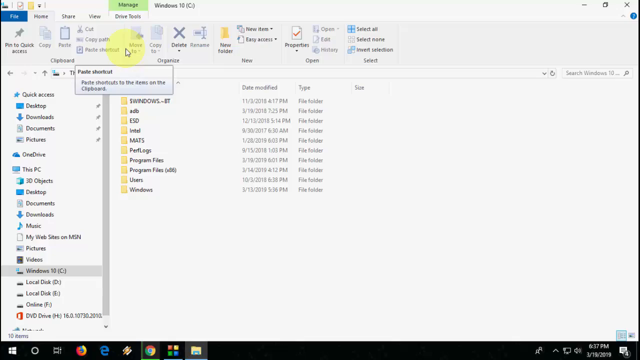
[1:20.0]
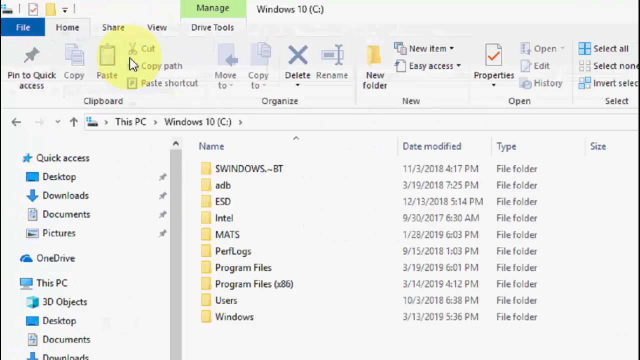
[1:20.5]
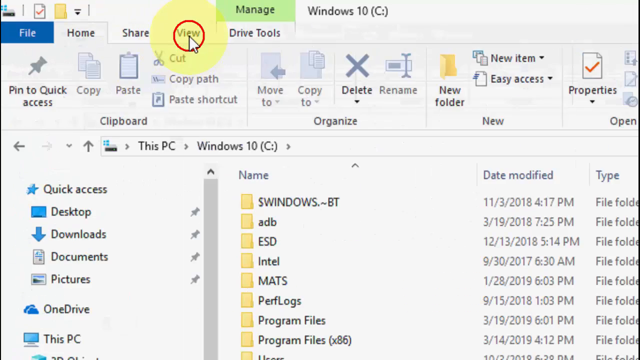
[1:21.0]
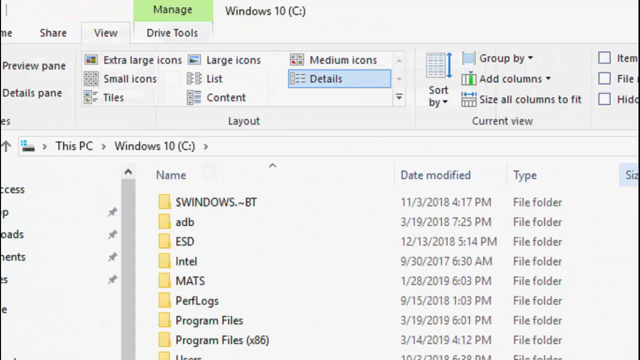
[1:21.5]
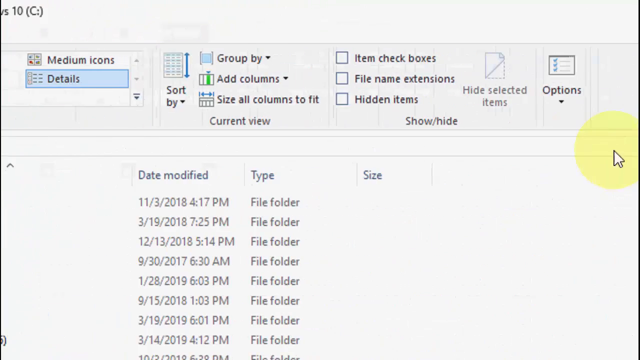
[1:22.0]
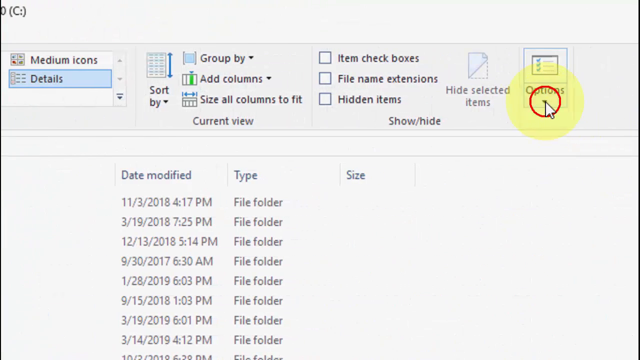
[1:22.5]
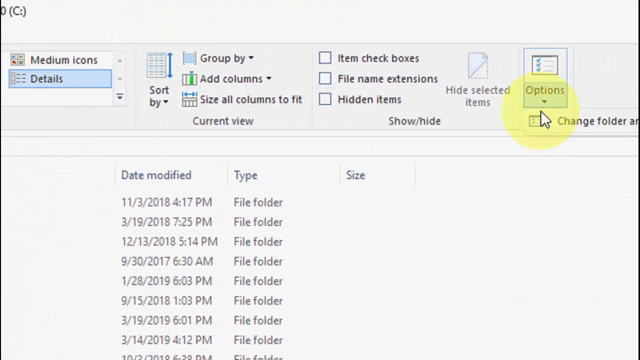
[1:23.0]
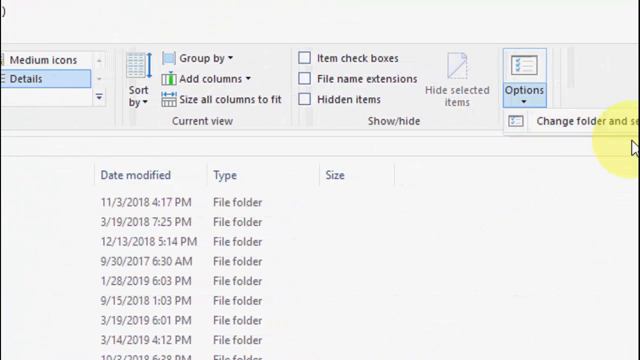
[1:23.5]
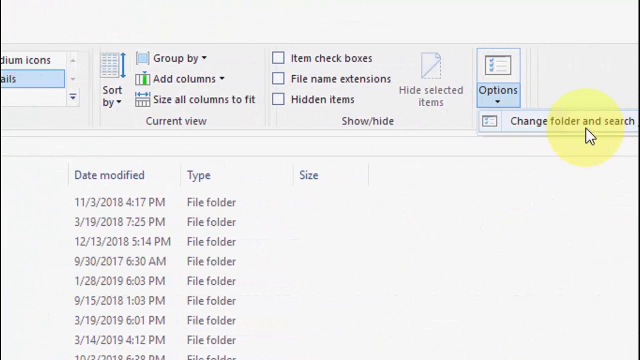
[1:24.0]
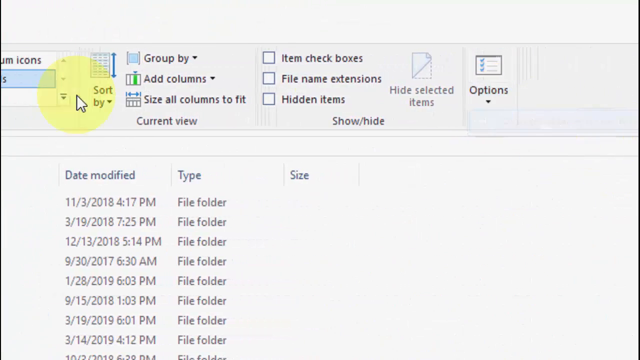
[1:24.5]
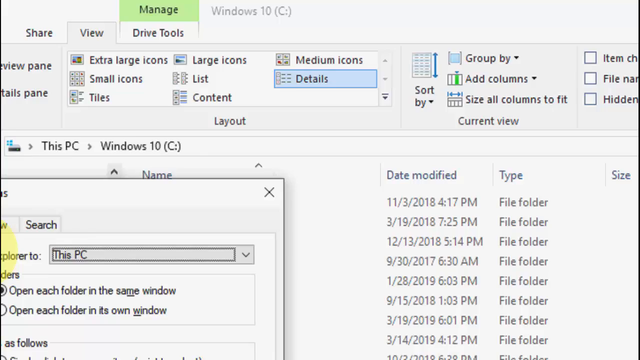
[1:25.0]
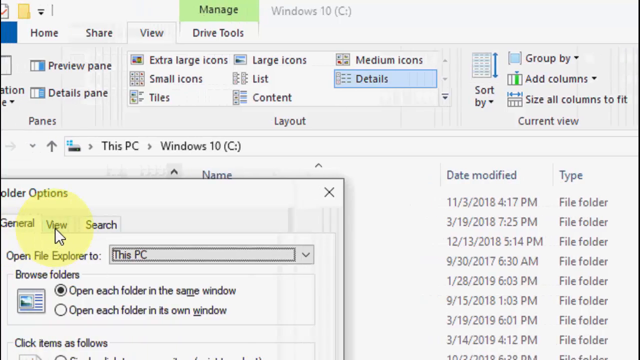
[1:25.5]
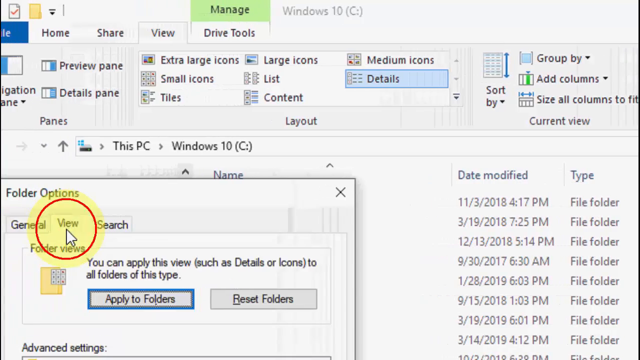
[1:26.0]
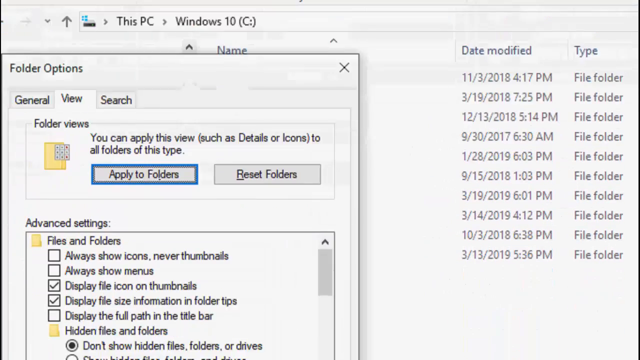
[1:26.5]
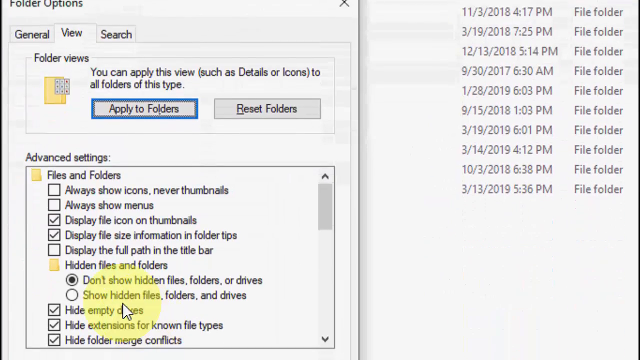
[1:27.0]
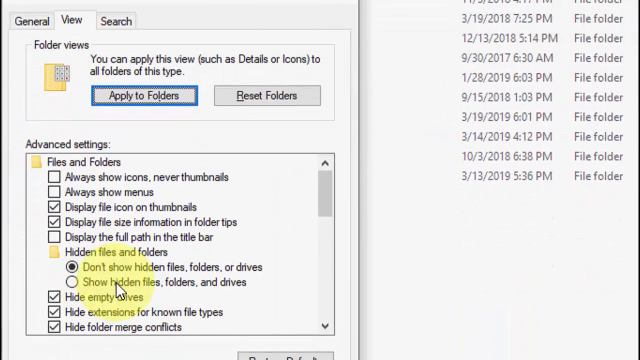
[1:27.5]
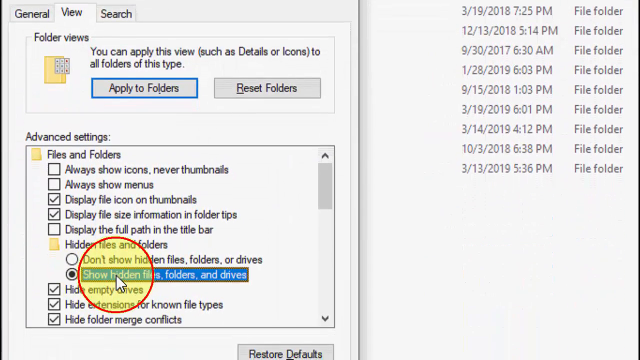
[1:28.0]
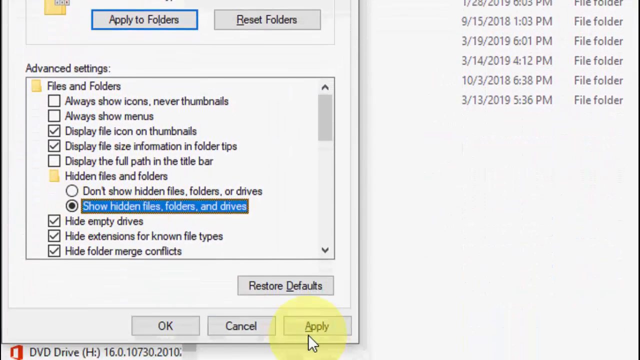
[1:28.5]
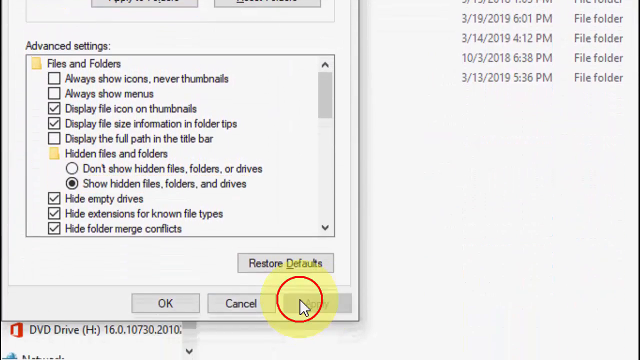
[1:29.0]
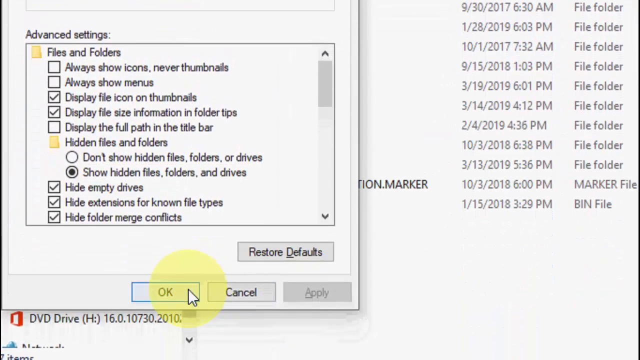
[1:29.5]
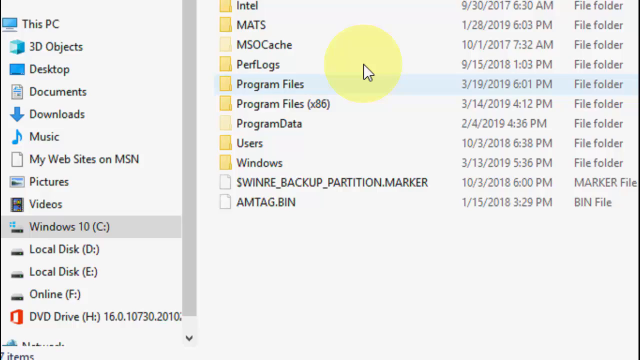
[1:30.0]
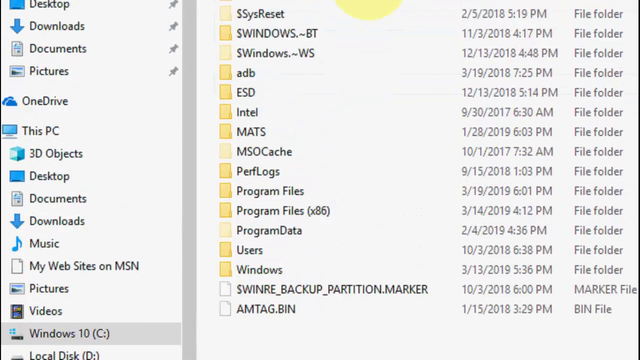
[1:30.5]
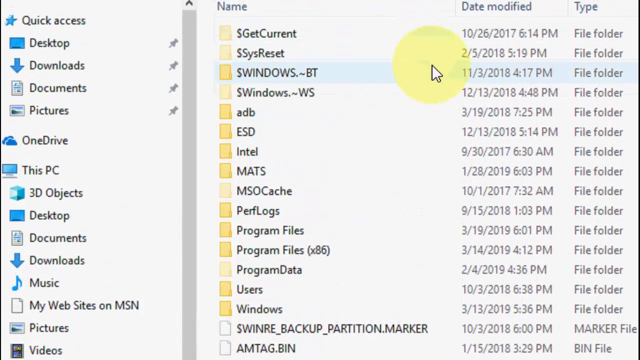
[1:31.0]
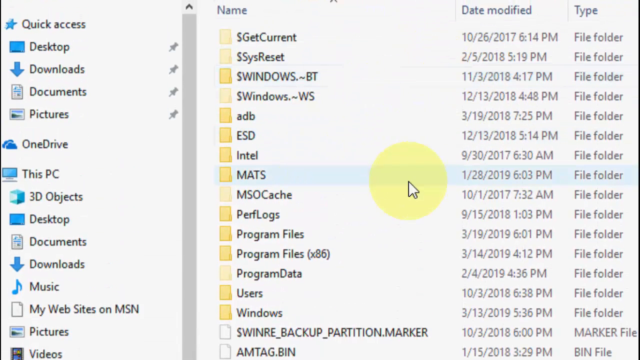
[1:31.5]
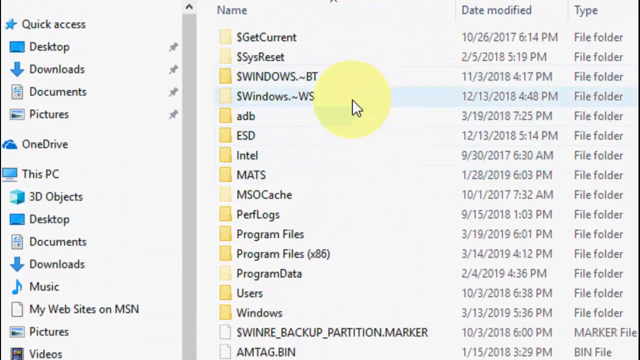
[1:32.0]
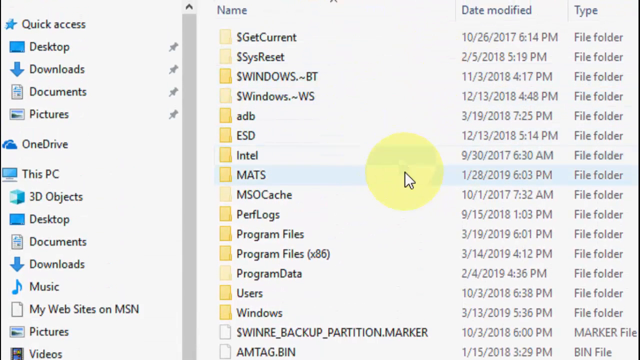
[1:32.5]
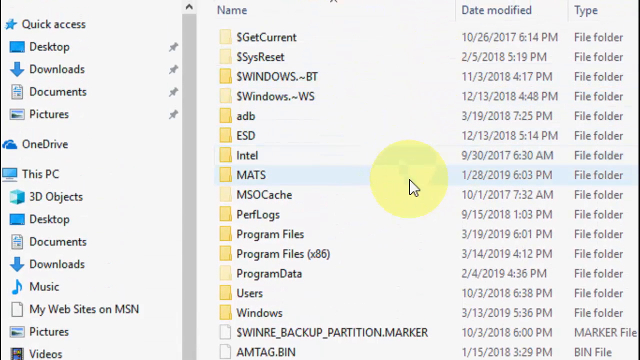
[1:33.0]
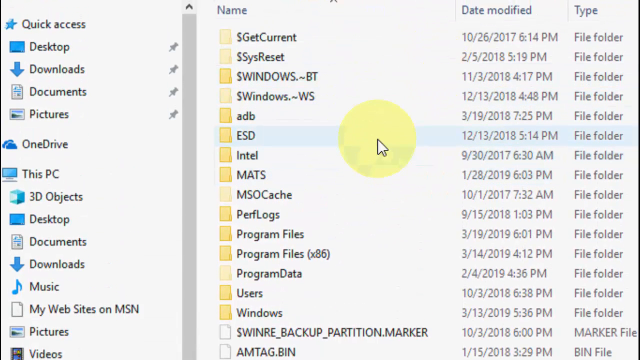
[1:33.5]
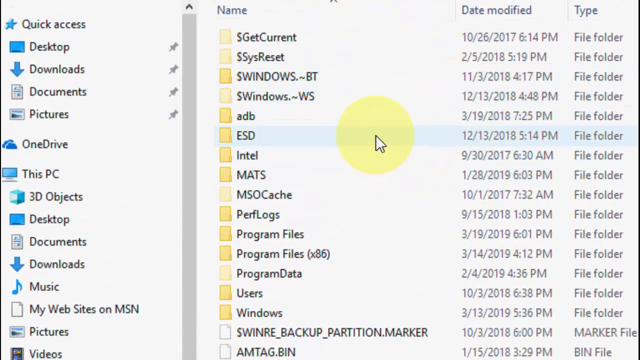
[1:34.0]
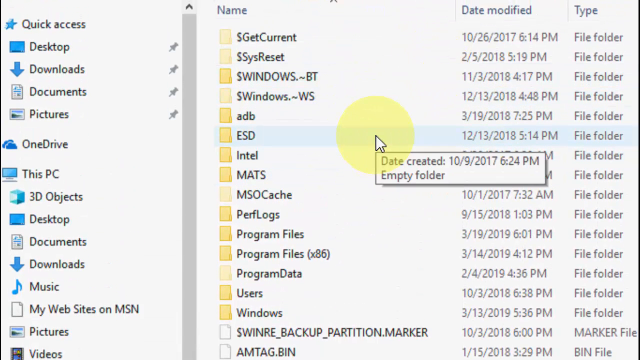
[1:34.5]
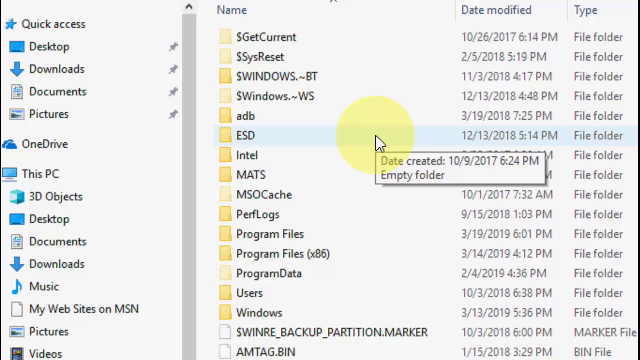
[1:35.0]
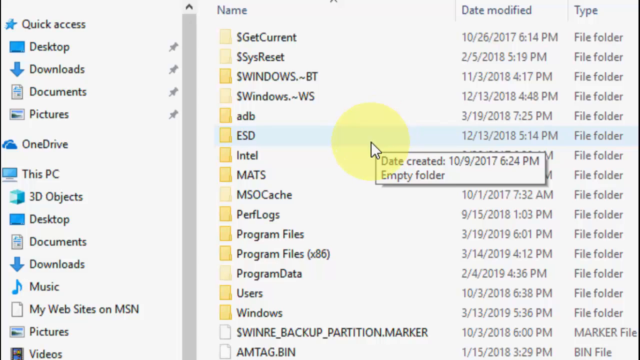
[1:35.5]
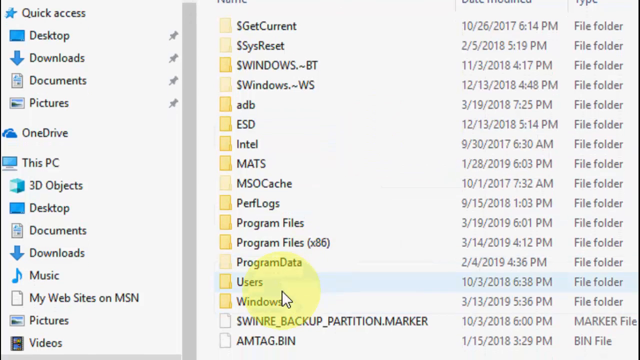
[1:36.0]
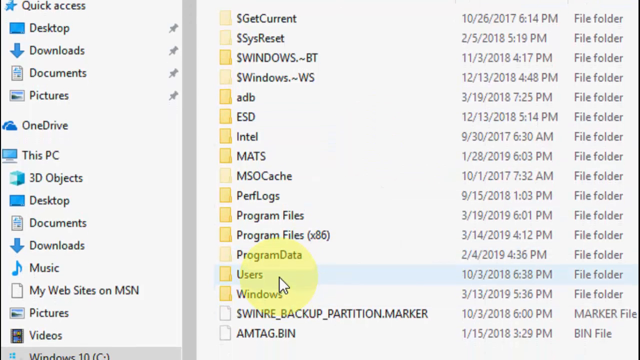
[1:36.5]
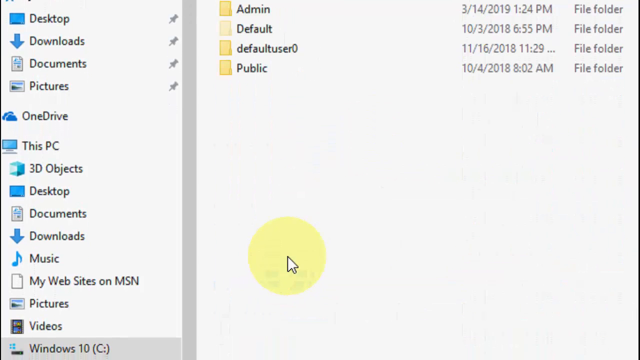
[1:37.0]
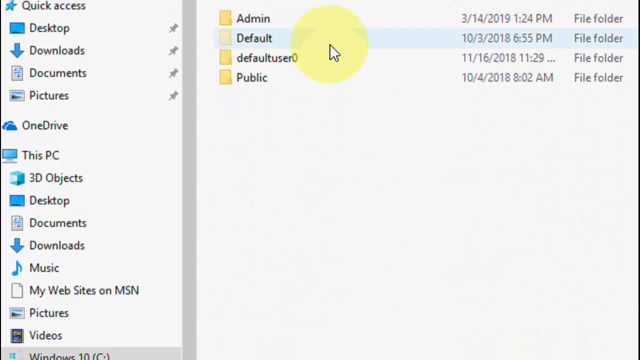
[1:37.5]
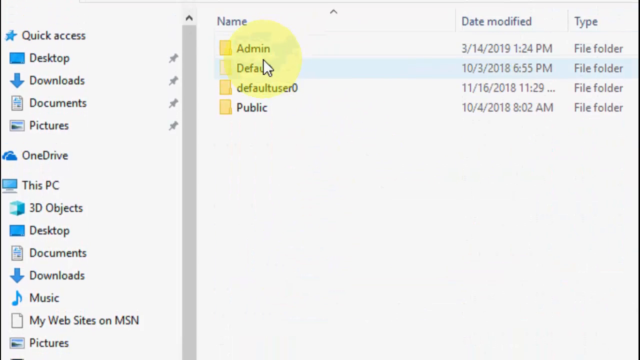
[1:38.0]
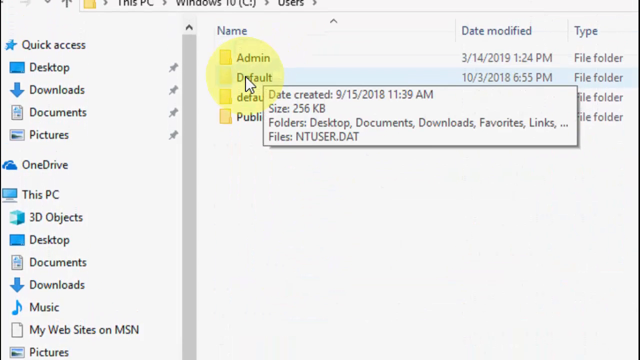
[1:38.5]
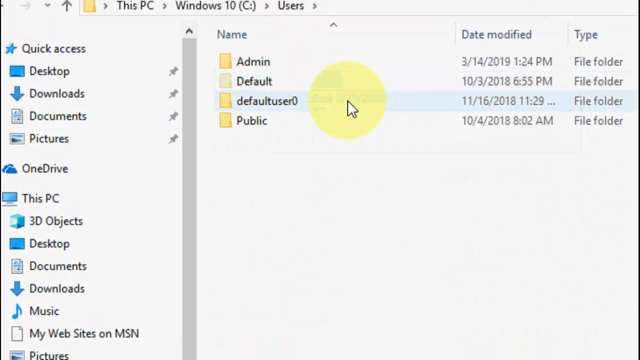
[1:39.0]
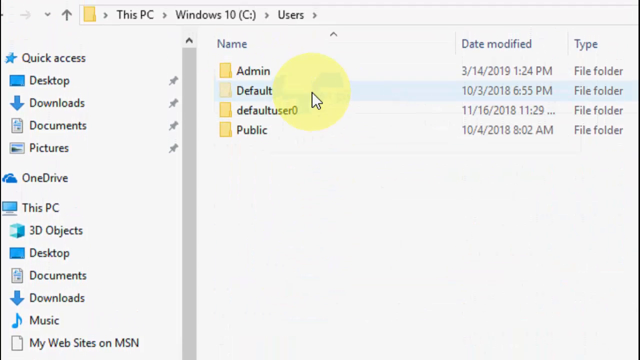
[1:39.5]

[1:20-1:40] A recording of a desktop computer screen shows an open folder containing various folders. The view zooms in on the tabs at the top of the folder: File, Home, Share, View, and Drive Tools. The mouse cursor, surrounded by a yellow circle, clicks View, and the menu scrolls to the right. The user clicks Options and then "Change Folder and Search Options", opening a new Folder Options window with three tabs: General, View, and Search. General is the active tab, but the user clicks View and scrolls down to the Advanced Settings in the display window, reaching a folder that reads "Hidden Files and Folders" with two radio-button options: a selected "Don't Show Hidden Files, Folders, or Drives" and an unselected "Show Hidden Files, Folders, and Drives". The user clicks "Show Hidden Files, Folders, and Drives", deselecting the first option and selecting the second, then clicks Apply and OK, which closes the window. They scroll up through the computer's various folders with many different file names, scroll down to Users, open it, scroll to Default, and click that folder.